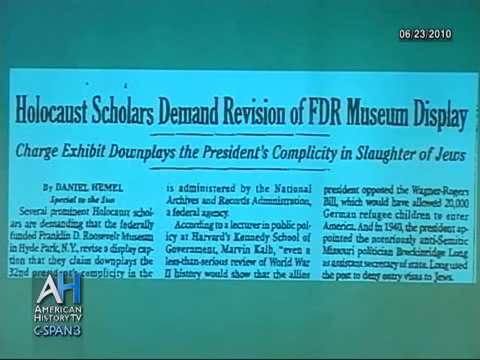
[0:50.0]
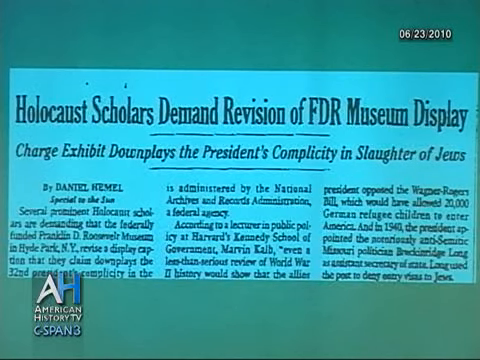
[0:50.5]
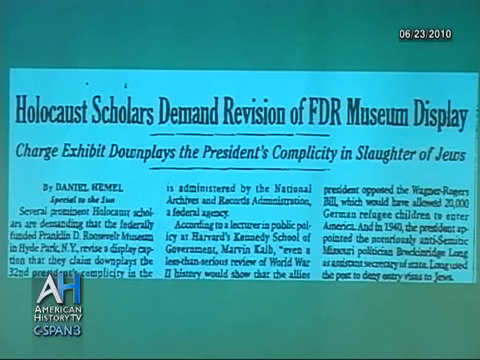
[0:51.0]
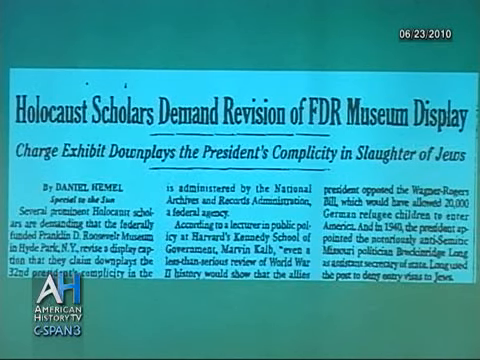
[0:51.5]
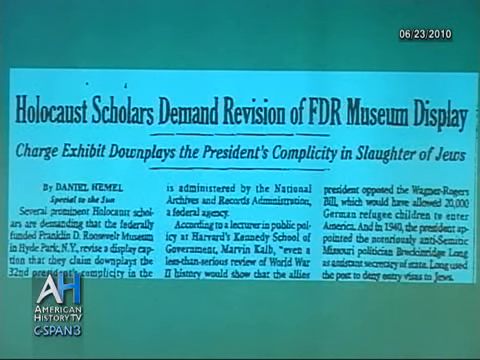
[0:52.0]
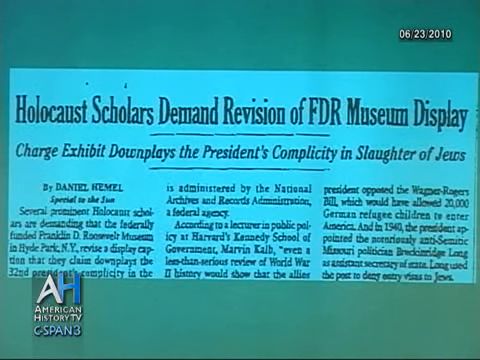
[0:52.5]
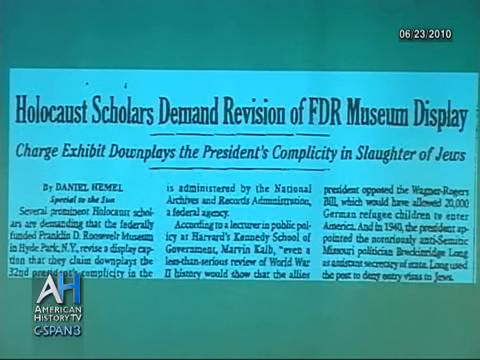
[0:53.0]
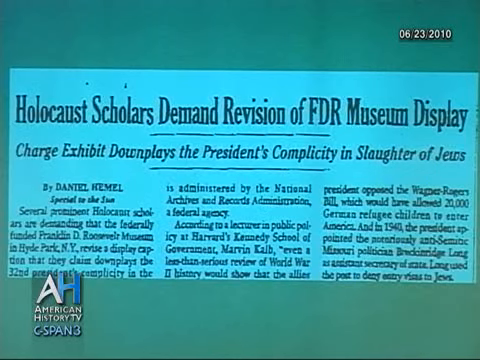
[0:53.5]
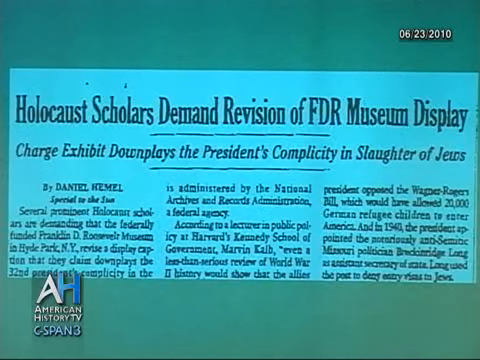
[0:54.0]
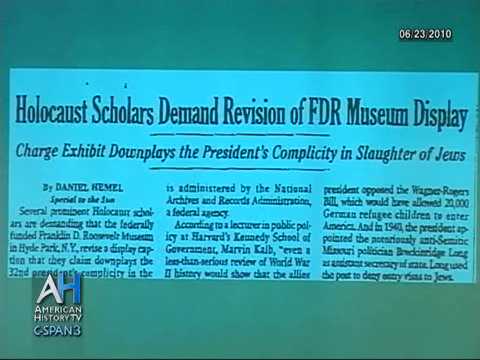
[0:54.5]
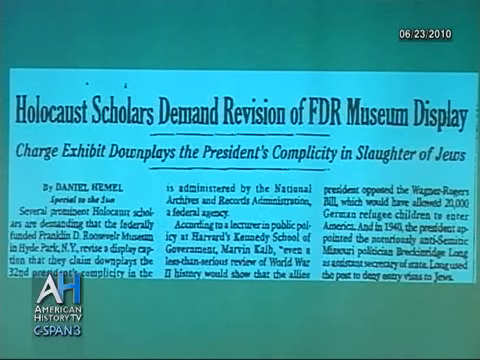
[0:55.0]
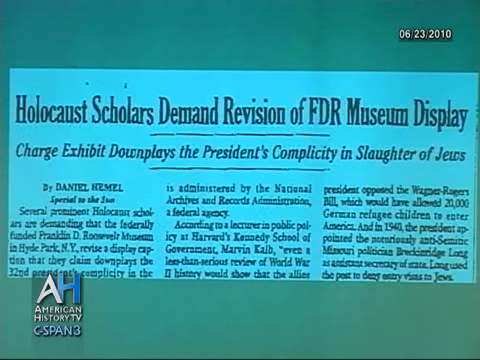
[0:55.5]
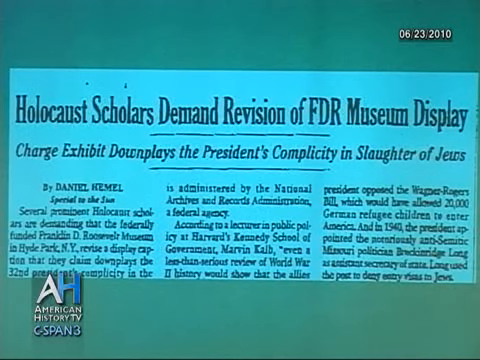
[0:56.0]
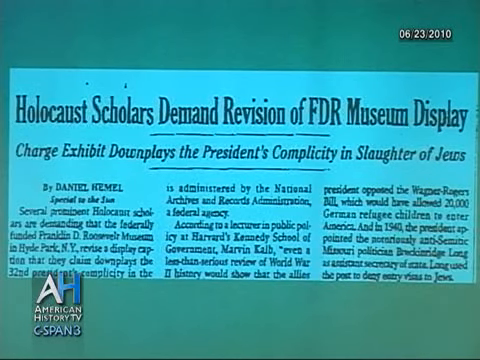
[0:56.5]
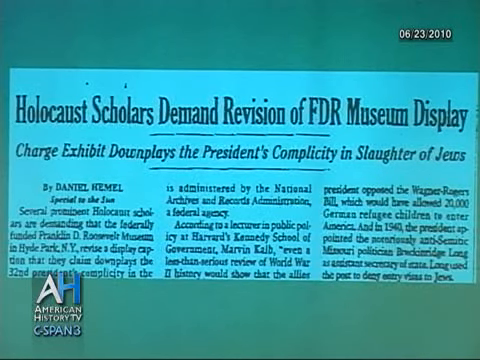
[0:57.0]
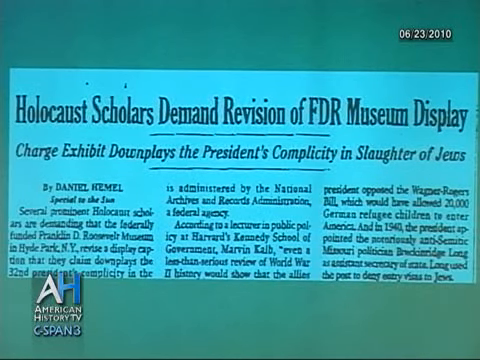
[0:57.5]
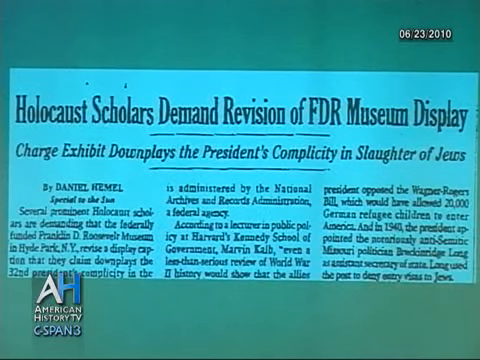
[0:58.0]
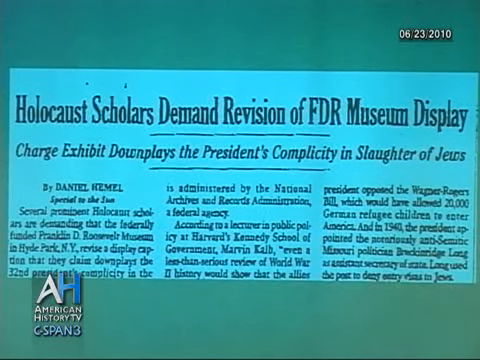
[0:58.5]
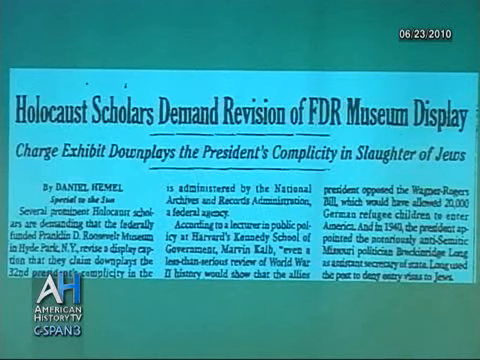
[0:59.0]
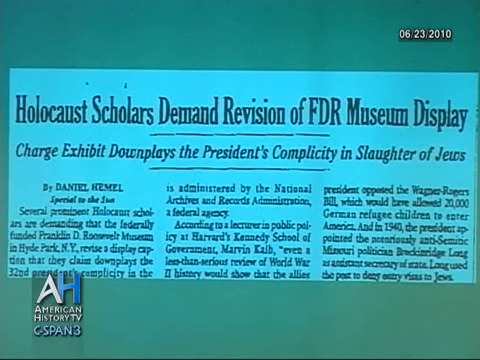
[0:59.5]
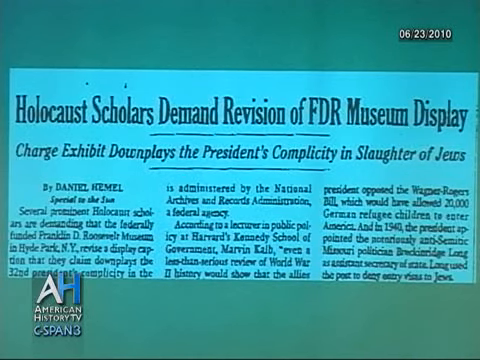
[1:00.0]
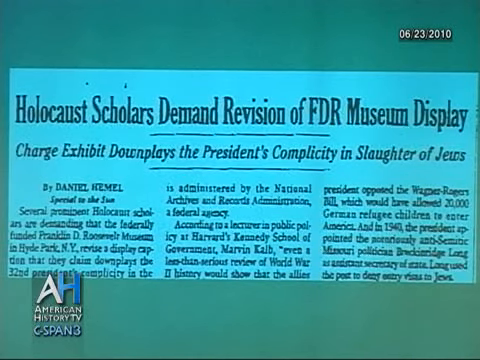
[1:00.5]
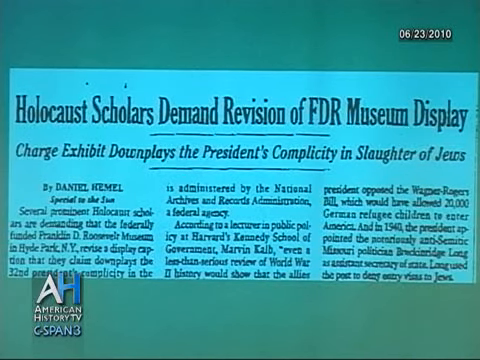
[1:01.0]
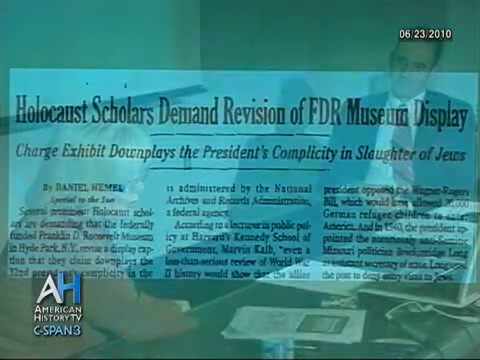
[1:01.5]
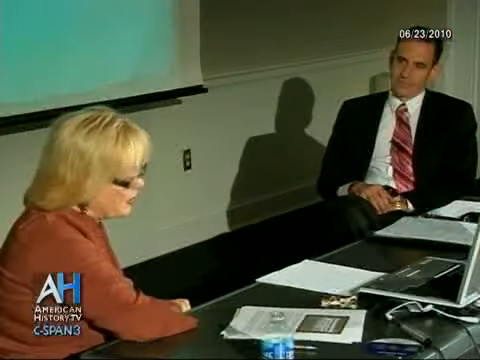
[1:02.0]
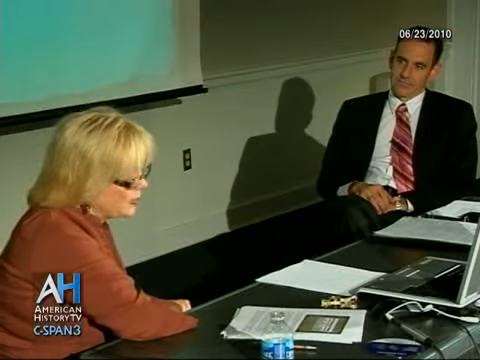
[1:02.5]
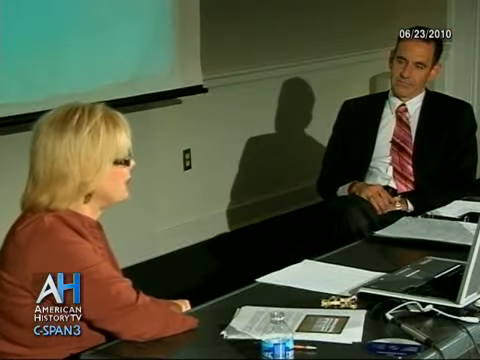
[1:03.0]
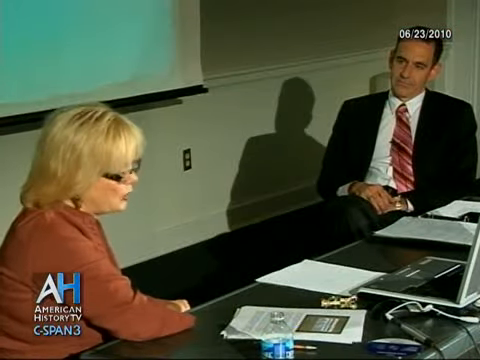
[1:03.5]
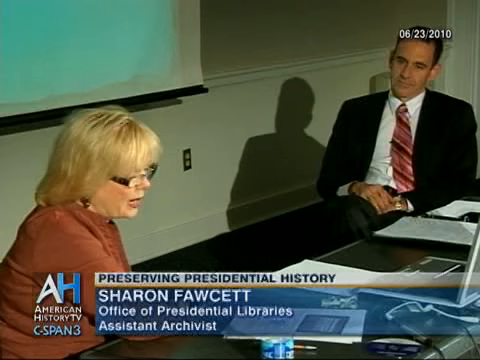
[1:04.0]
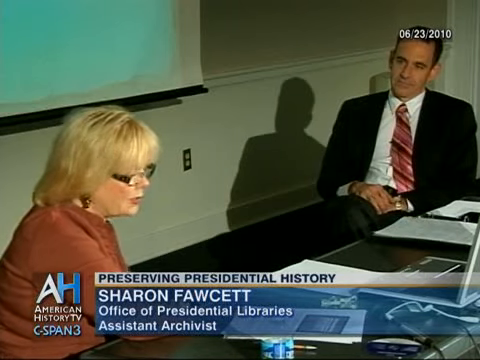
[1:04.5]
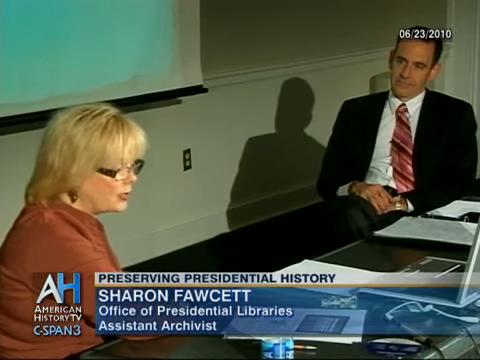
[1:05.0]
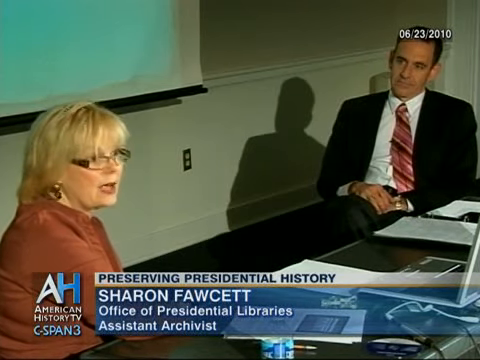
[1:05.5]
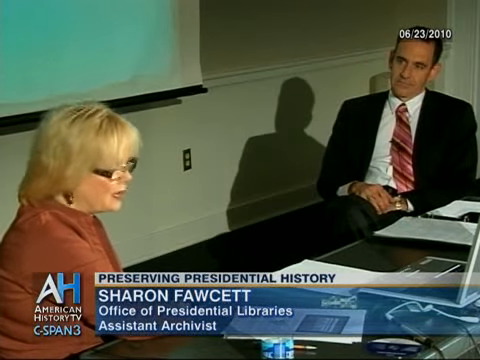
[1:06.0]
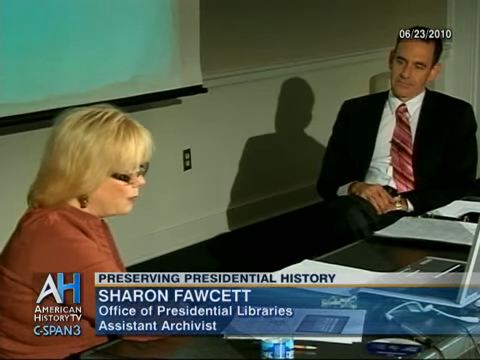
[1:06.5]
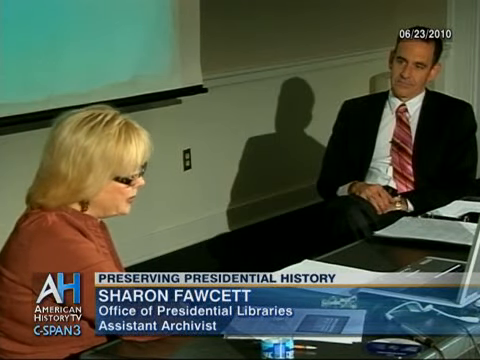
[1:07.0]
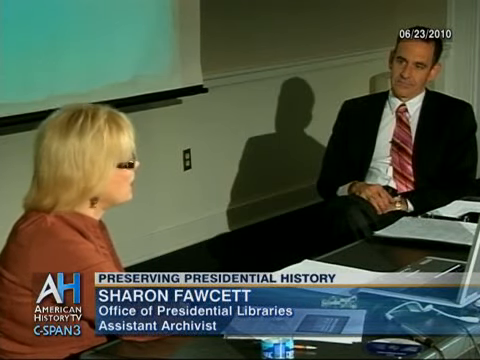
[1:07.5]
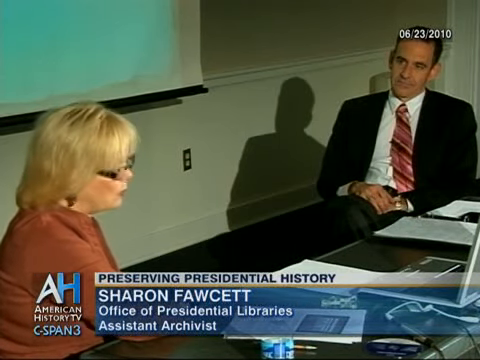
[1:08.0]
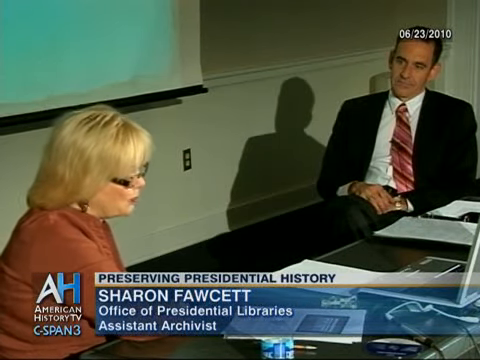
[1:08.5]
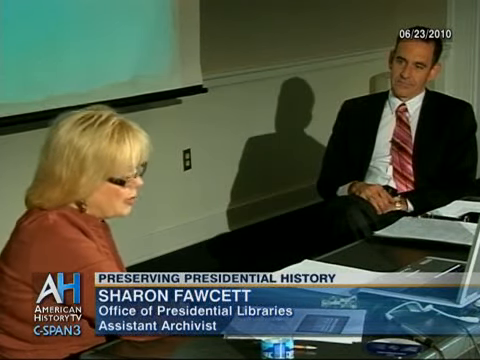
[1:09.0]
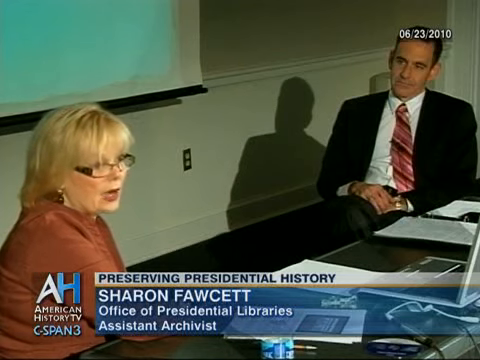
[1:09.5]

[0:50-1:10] The static image of the newspaper cutout continues; in the second column the article quotes Marvin Kalb. The video then quickly cuts back to the people having a conversation in the conference room, with apparently an audience off screen to the right. The woman continues to talk, her right shoulder turned toward the camera so she is seen from the side. The man in the upper right of the screen is looking at the woman and casts a shadow on the wall to his right, which is the viewer's left. The woman keeps talking; at one point she lifts her head and looks toward the audience. A label pops up on the screen identifying her as Sharon Fawcett, an archivist, with a few more words about what she does. She occasionally looks down at the notes in front of her and then looks toward the man, who is watching her. They might be having a debate.